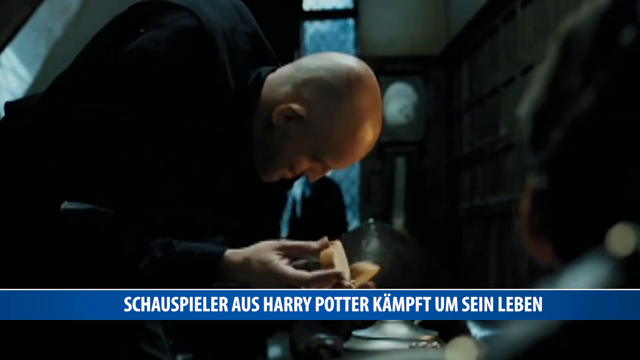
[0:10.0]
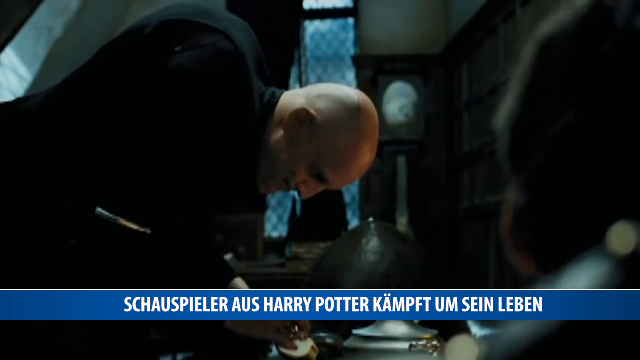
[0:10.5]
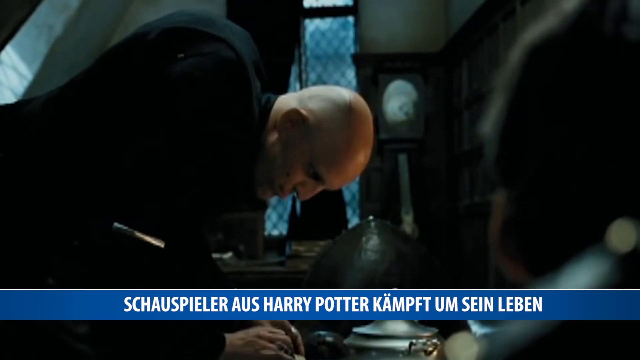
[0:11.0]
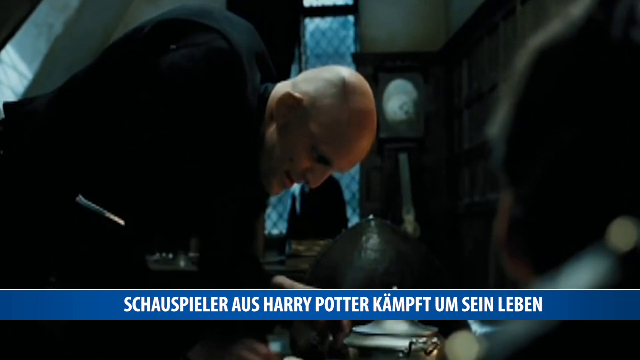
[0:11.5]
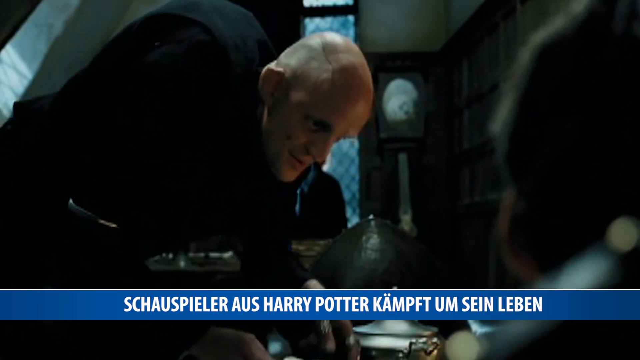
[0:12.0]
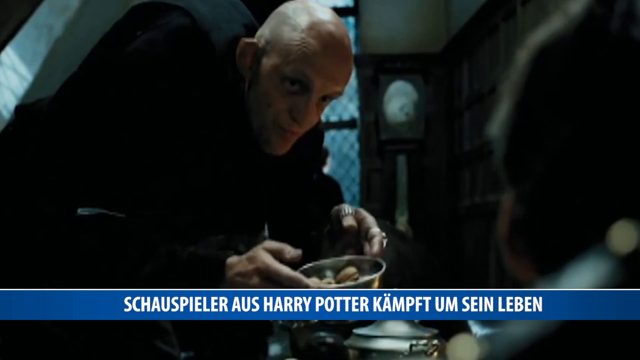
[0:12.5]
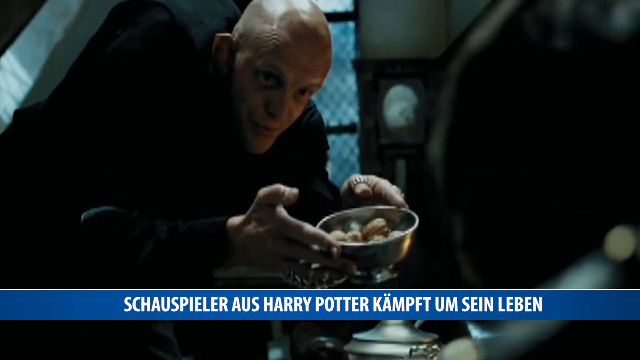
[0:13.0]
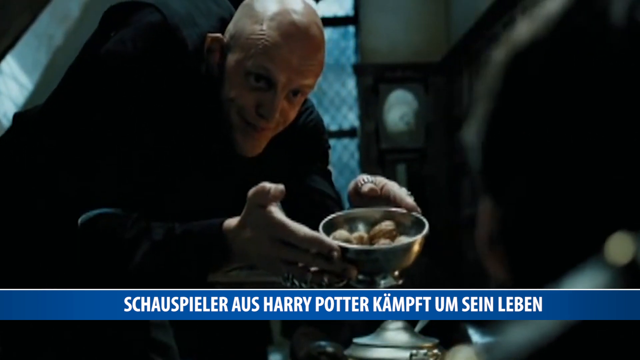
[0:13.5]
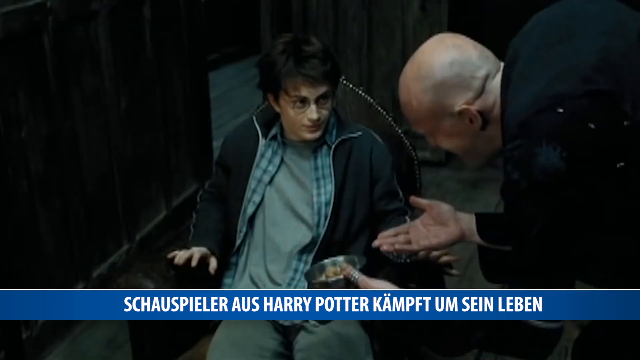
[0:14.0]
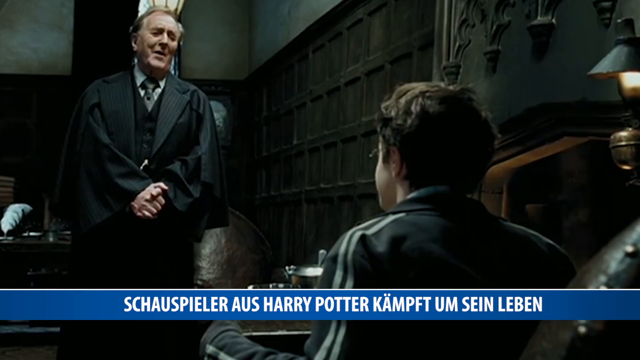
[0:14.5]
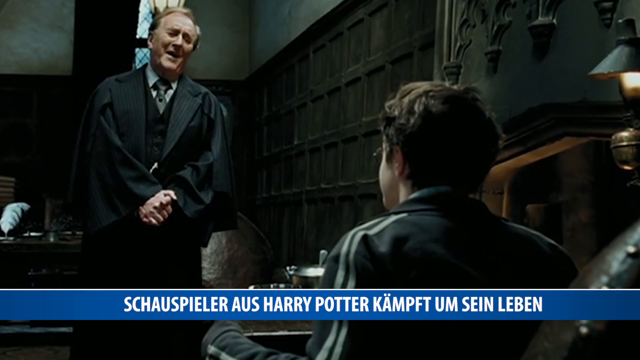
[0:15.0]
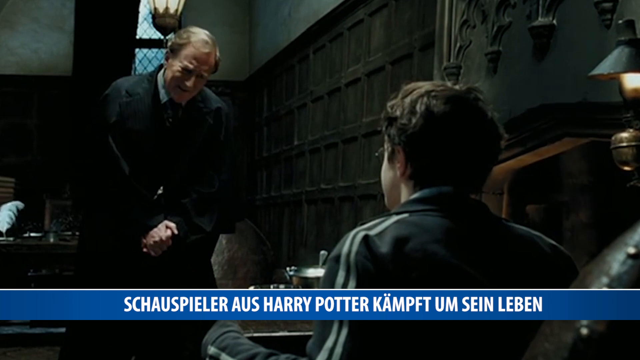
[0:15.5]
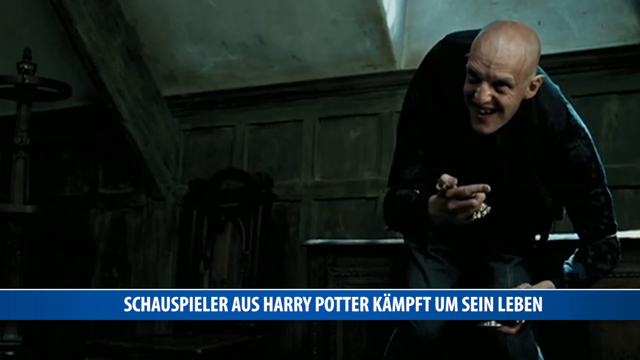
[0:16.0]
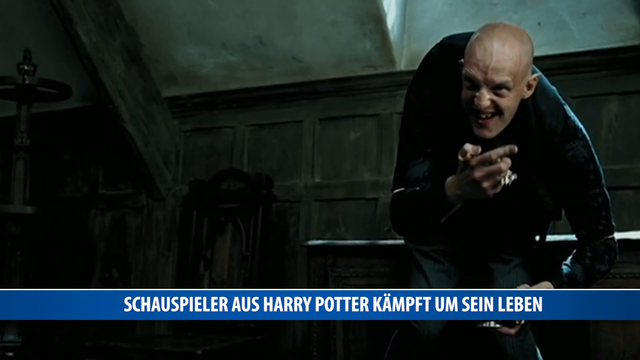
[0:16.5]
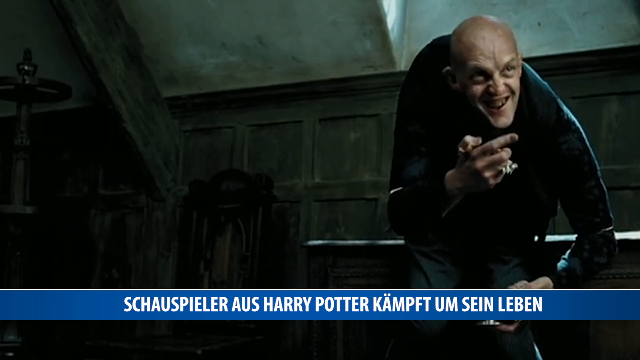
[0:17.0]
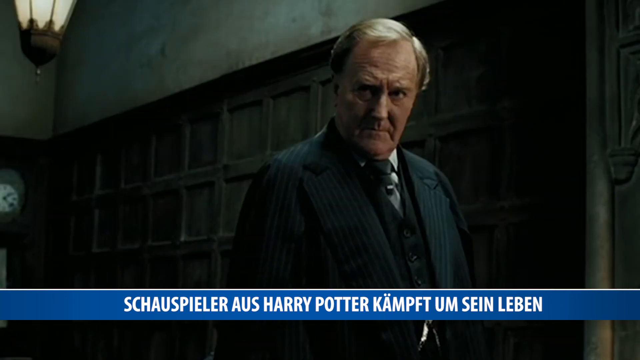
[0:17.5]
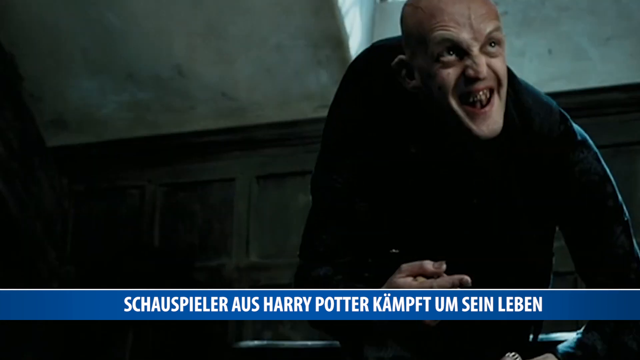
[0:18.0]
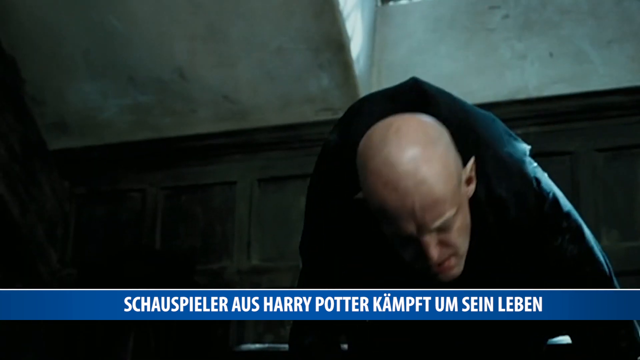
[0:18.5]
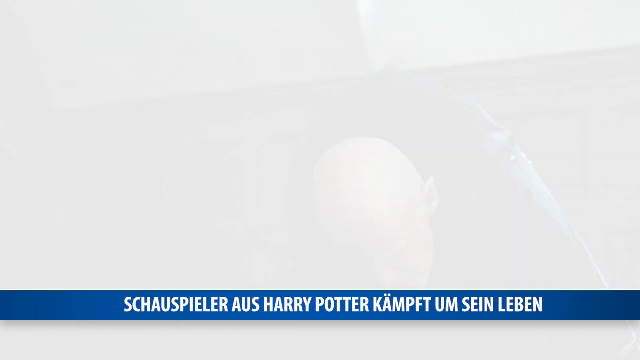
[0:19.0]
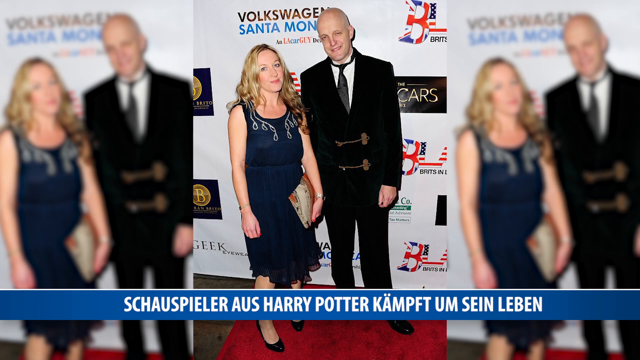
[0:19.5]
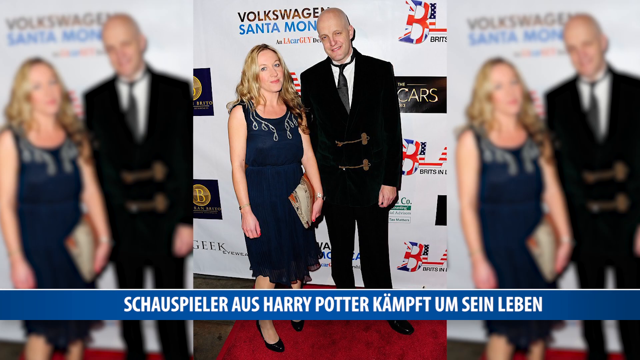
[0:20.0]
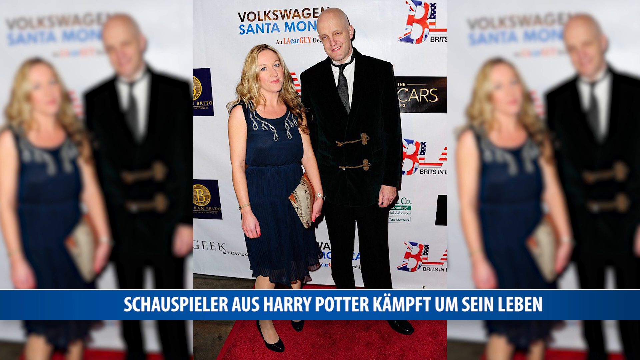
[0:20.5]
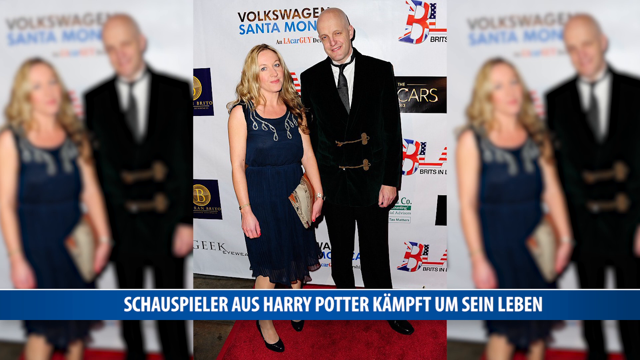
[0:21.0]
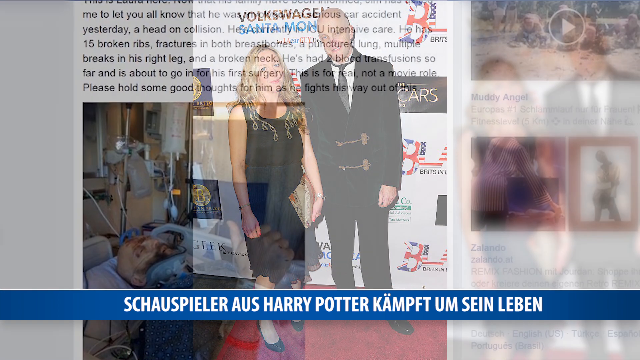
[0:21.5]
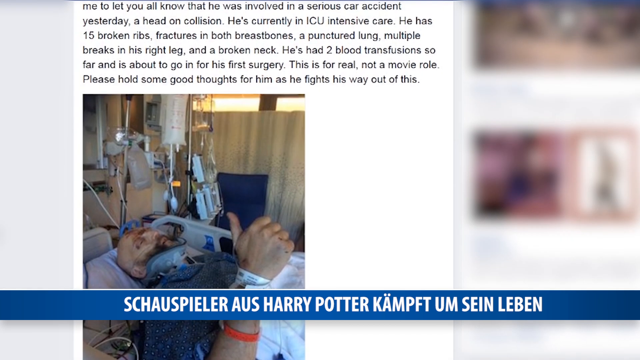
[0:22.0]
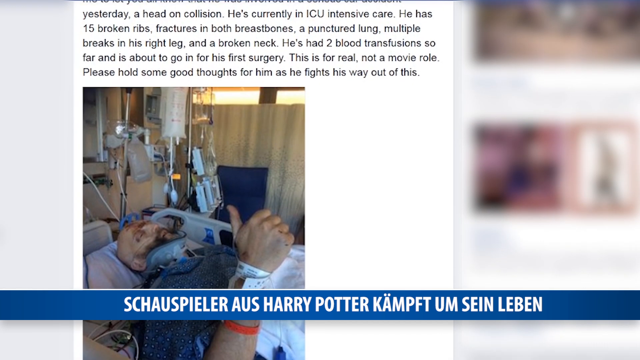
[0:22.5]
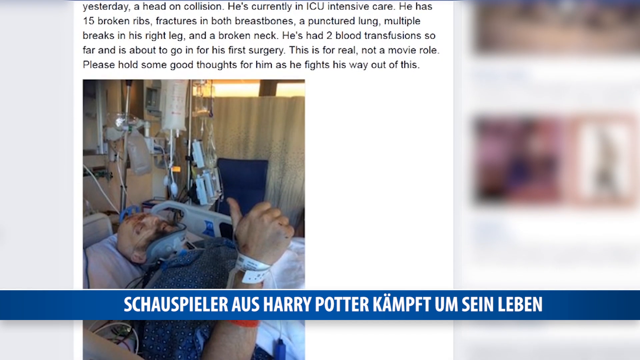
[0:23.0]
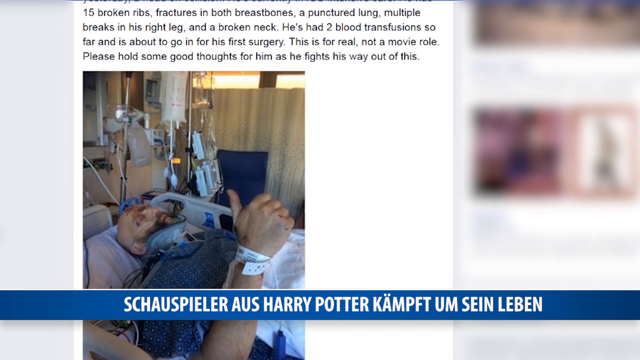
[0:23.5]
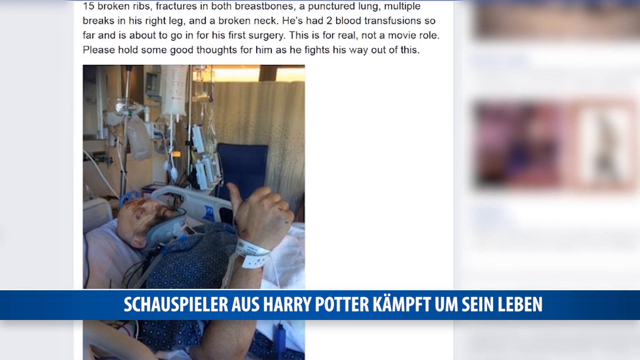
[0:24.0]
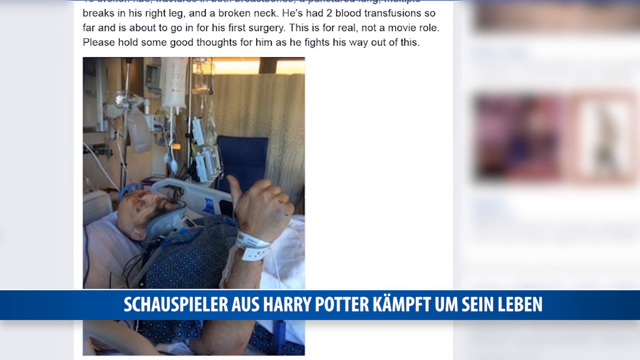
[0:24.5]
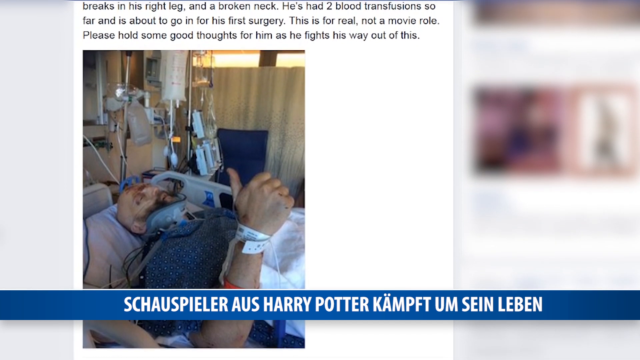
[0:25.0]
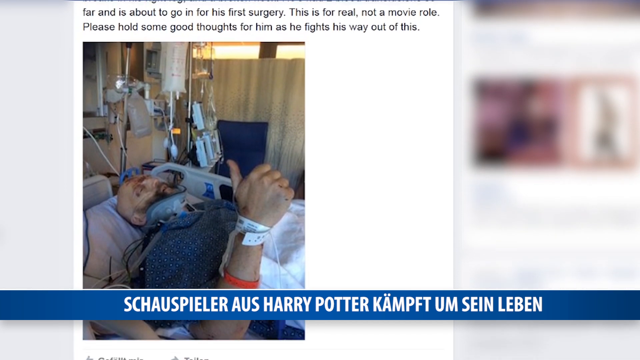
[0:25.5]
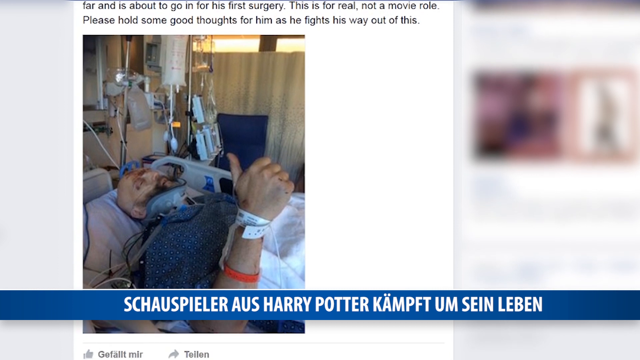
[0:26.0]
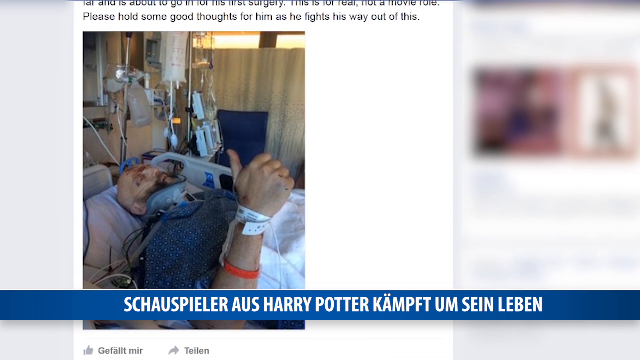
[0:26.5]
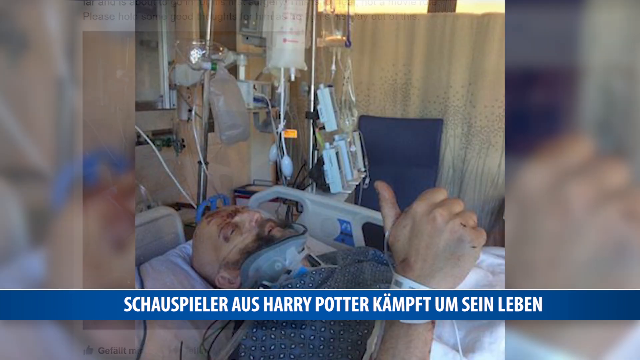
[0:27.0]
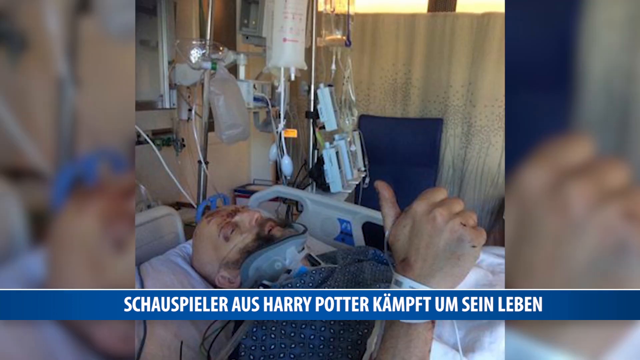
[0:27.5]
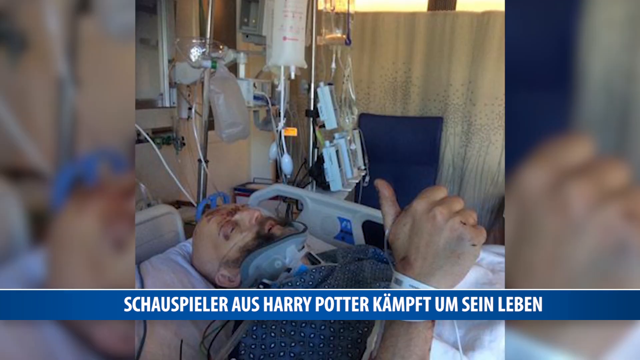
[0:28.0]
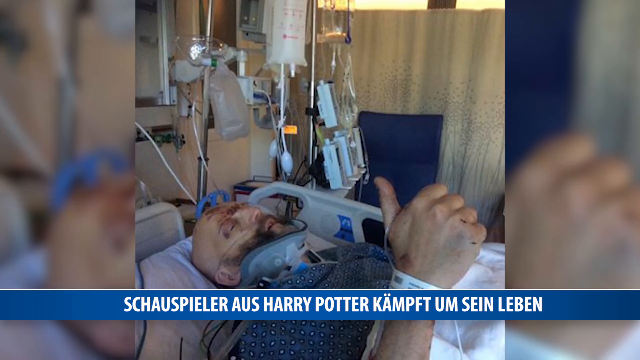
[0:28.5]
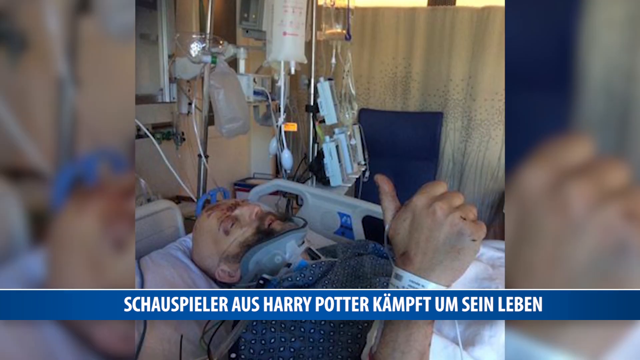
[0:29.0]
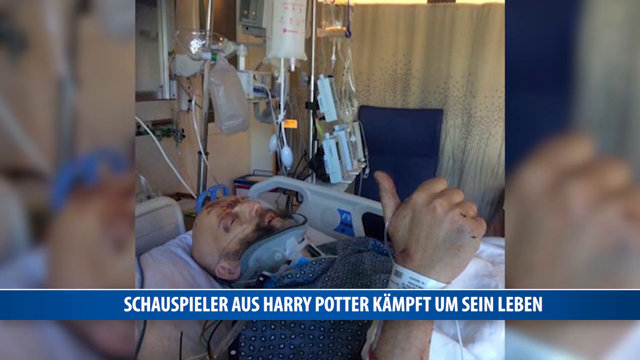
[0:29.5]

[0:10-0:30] The sort of bald Caucasian individual continues to be shown in this setting, with information specifically relating to the movie, before the video transitions to another screen. The individual appears with a female in a blue dress at a sort of red carpet-style event. He then says that he had a collision, a broken neck, two blood transfusions and surgery, and asks people to send him good thoughts, while he looks very hurt and not very good in a sort of hospital-style setting.